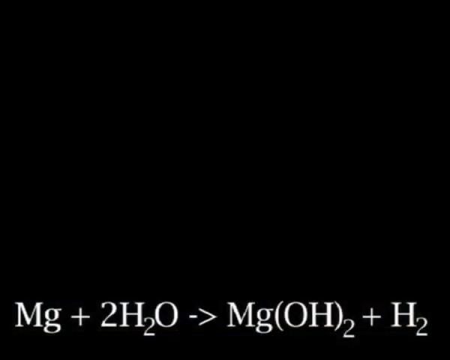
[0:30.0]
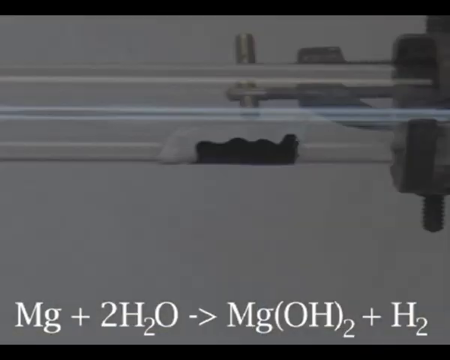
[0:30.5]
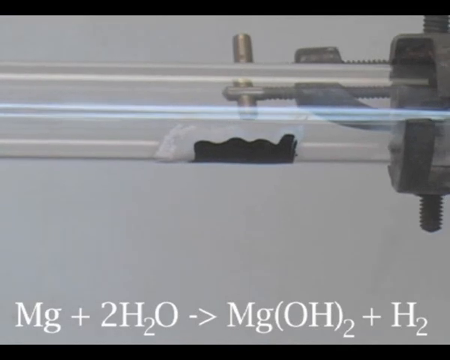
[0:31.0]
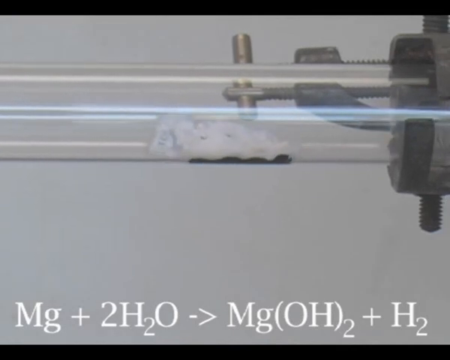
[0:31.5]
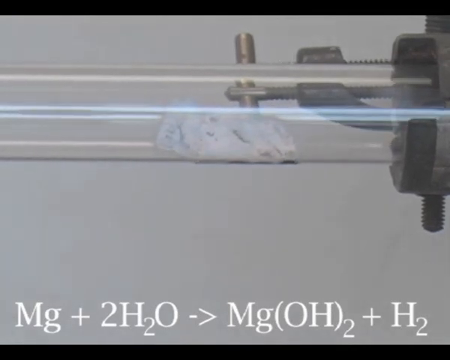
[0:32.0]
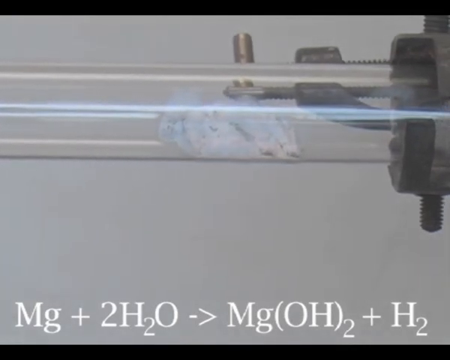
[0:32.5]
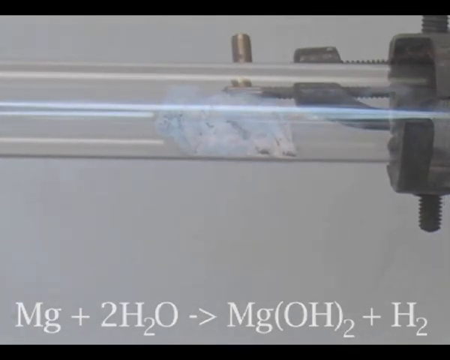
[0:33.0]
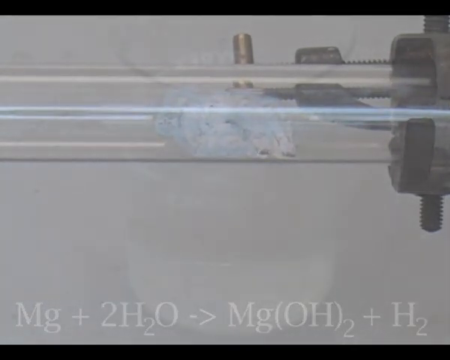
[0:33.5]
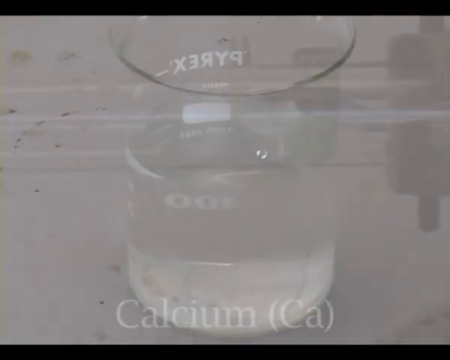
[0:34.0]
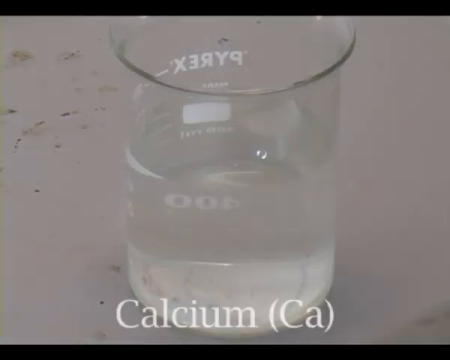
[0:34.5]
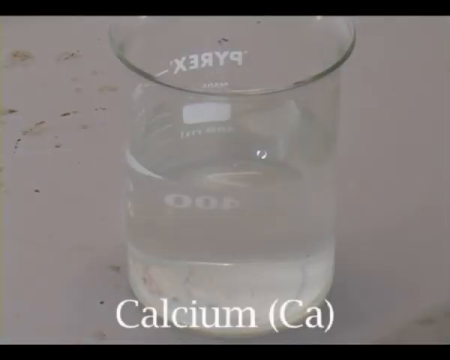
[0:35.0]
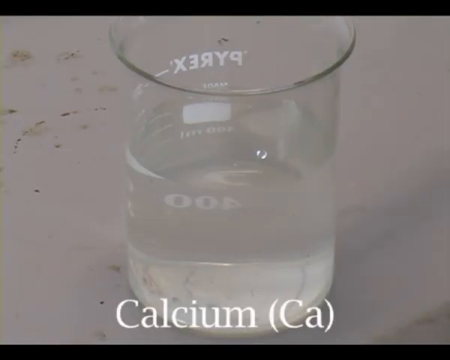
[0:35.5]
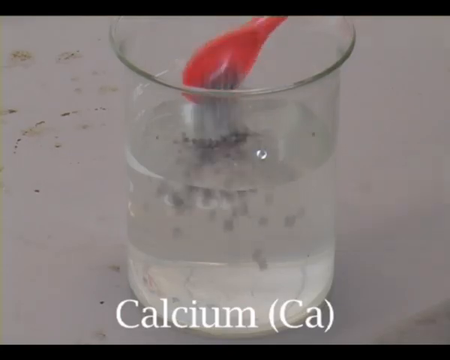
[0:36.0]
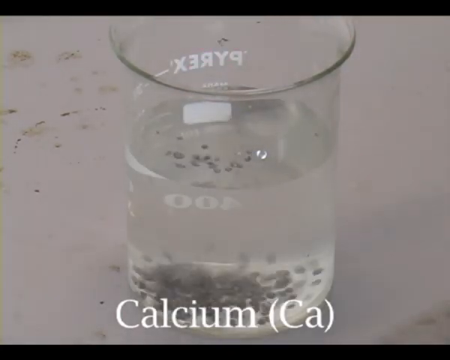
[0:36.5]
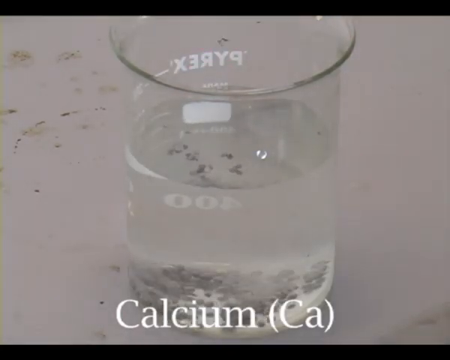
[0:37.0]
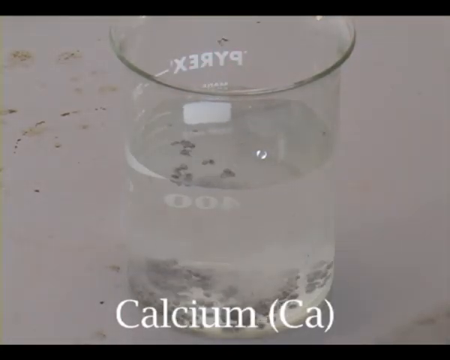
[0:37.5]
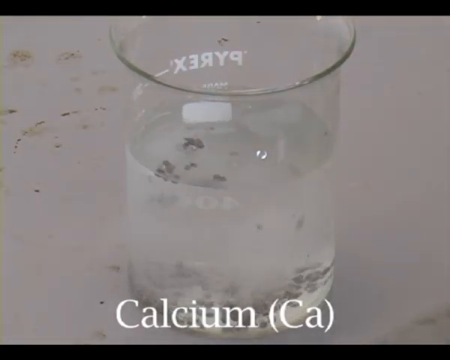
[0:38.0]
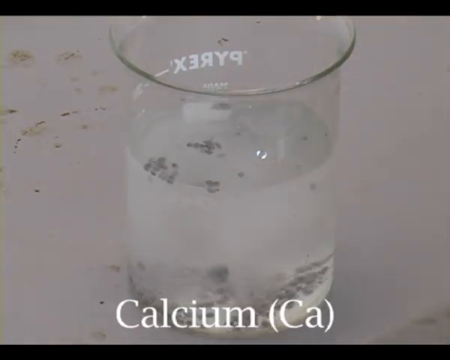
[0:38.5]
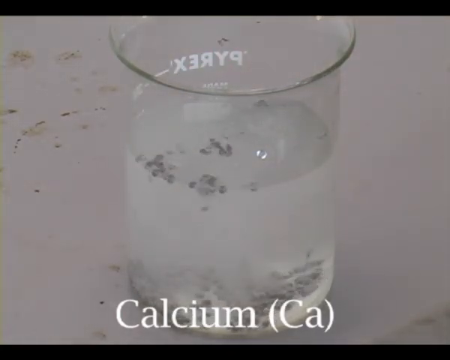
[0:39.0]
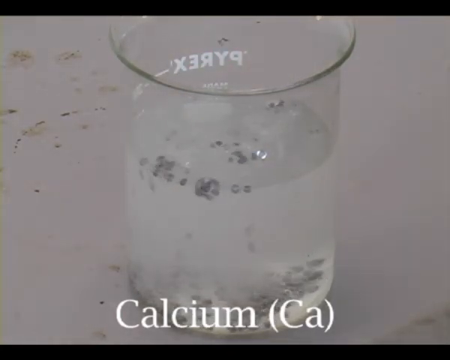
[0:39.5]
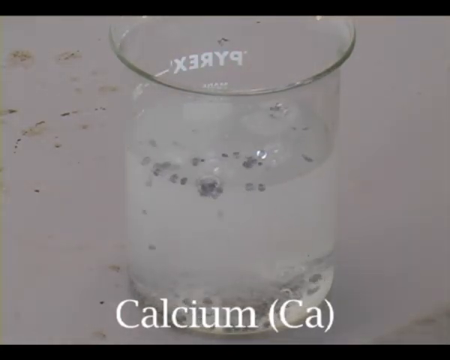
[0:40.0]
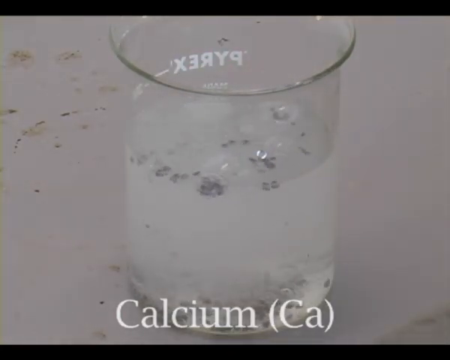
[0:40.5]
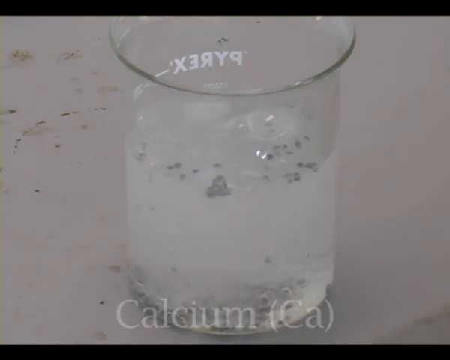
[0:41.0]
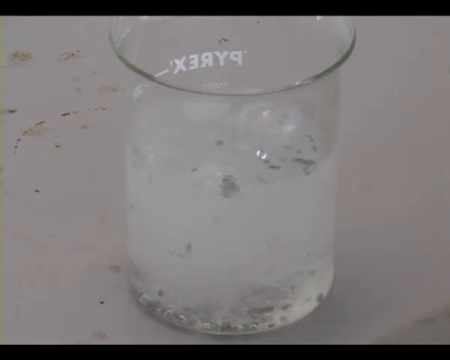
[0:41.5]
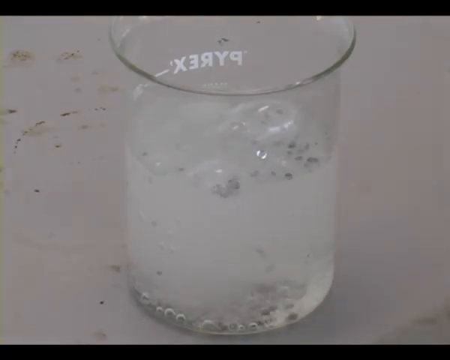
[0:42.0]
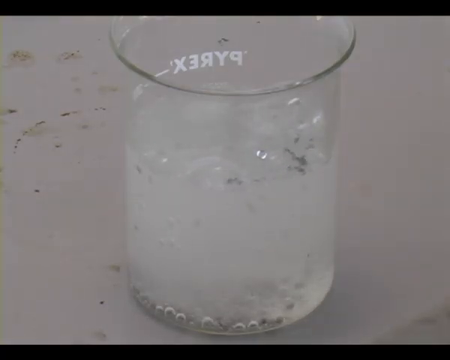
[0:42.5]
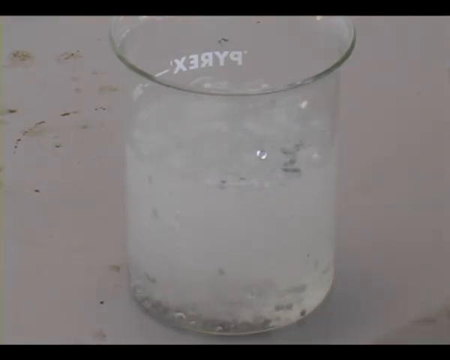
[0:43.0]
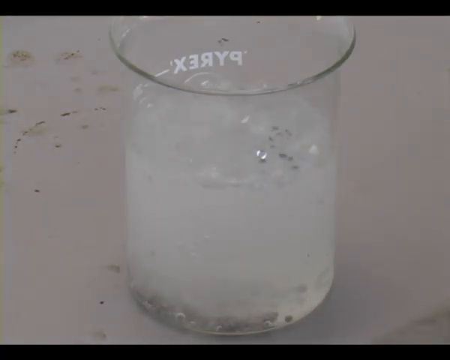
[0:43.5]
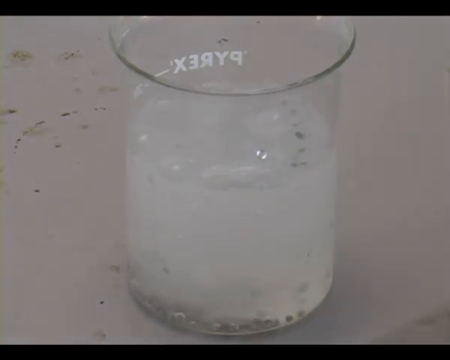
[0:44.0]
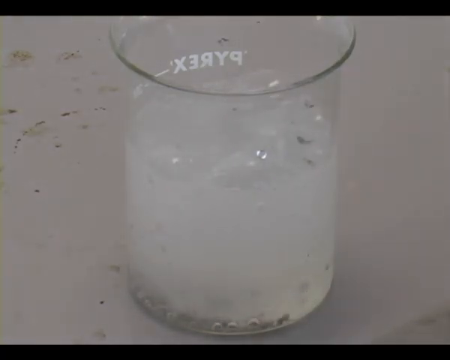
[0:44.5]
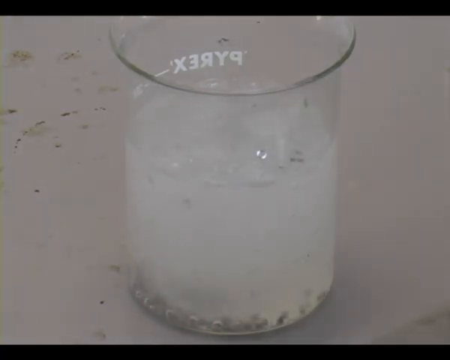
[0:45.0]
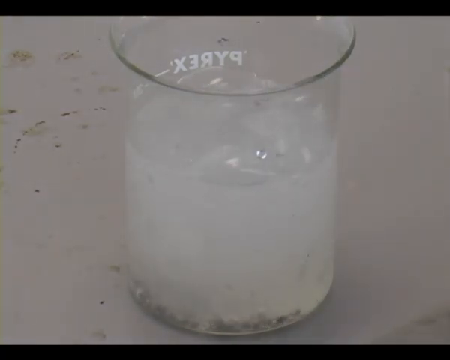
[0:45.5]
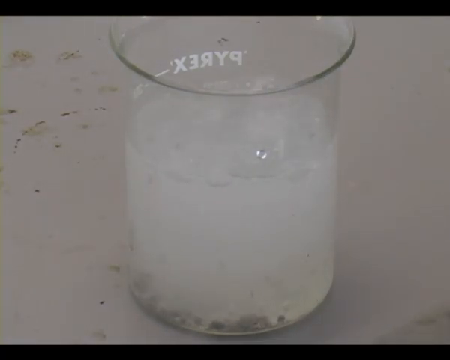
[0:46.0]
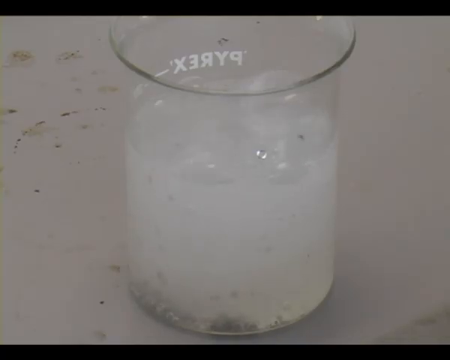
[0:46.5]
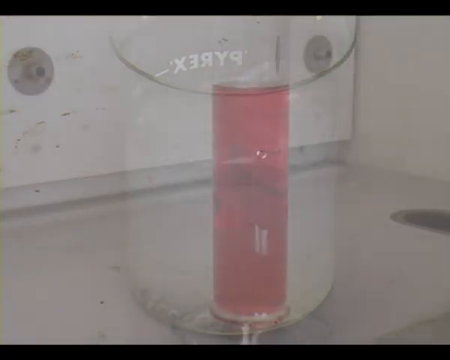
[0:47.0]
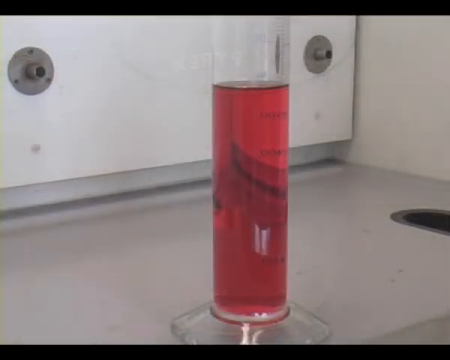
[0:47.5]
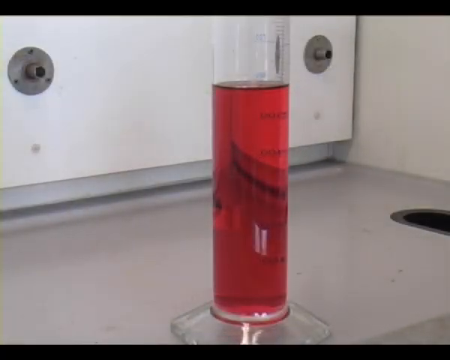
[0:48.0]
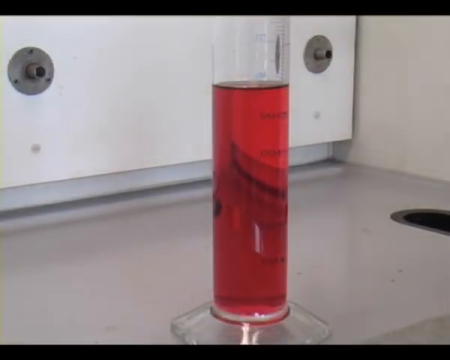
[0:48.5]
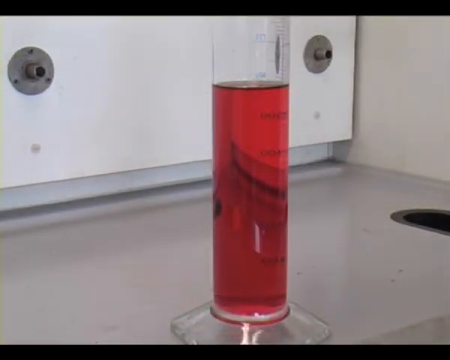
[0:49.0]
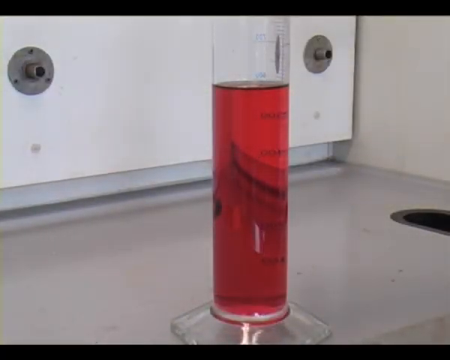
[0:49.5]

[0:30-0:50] The formula "Mg + 2H2O -> Mg(OH)2 + H2" is on screen. Each side has been heated, and the view moves to the chemistry tube, where there is some movement inside: what almost looks like a wad of something moves a little as it is heated. The scene then shifts to a glass with some liquid in it and the text "calcium (Ca)." Using a red spoon, someone adds what look like little tiny rocks or pebbles, possibly the calcium. The pebbles begin to react: the liquid fizzes, and they sit at the bottom while bubbles rise and things move around. The video then shows a thin red canister, and in the final moment some of the material is dropped into this little red canister, which holds liquid.